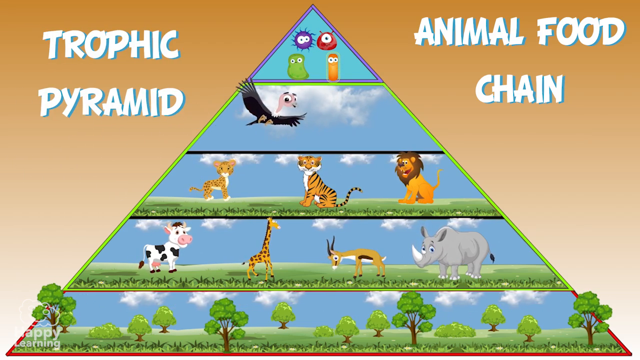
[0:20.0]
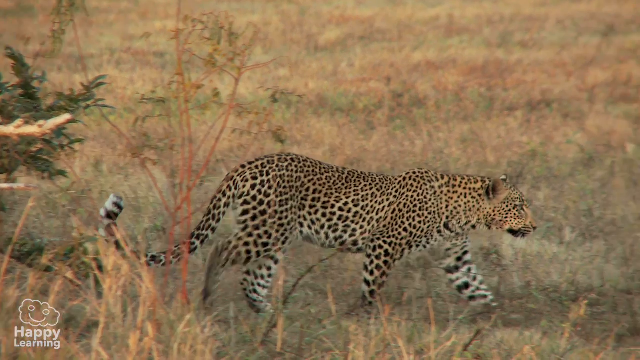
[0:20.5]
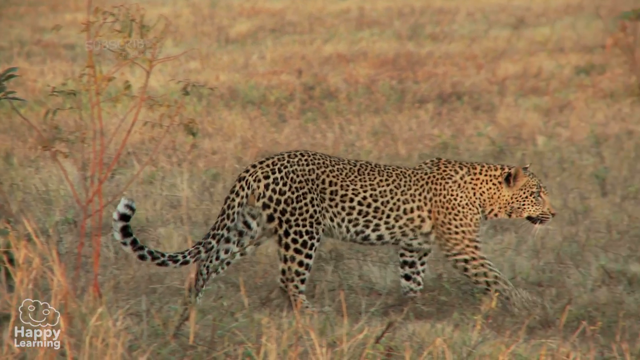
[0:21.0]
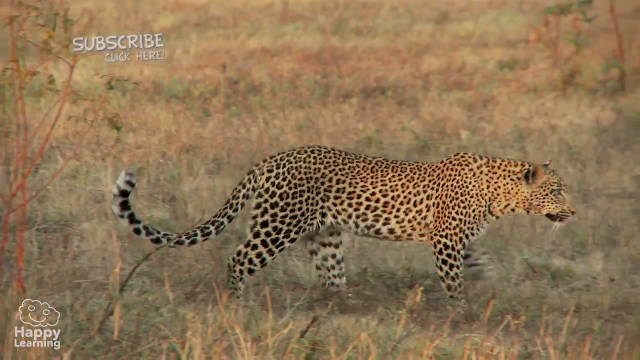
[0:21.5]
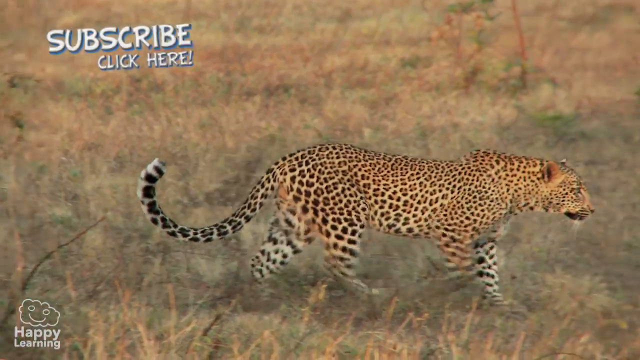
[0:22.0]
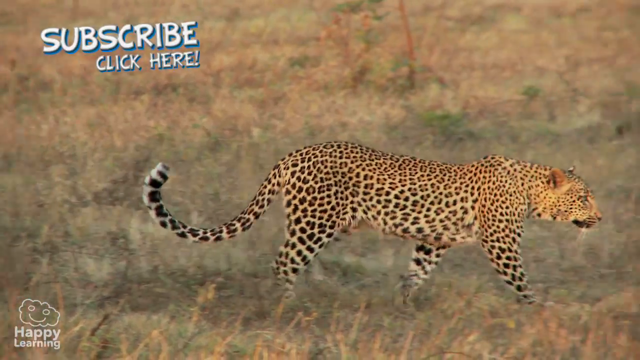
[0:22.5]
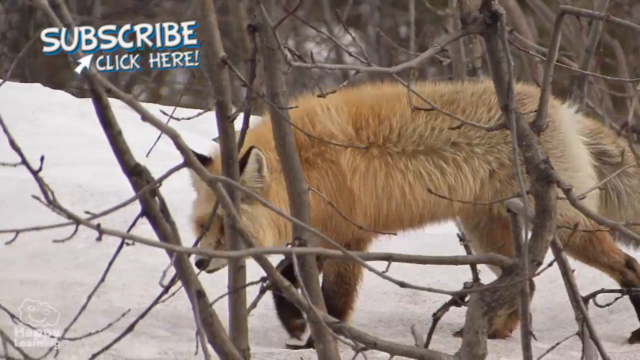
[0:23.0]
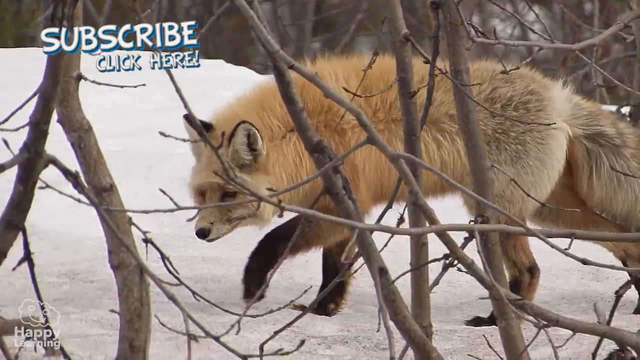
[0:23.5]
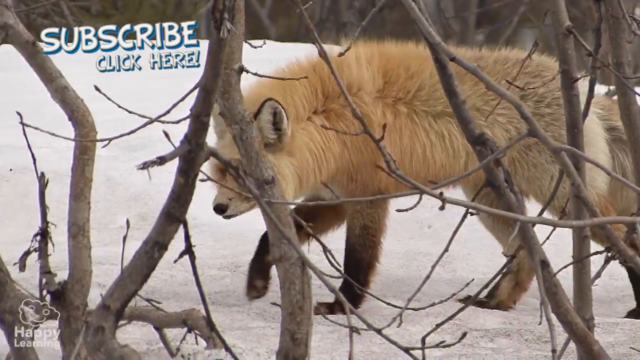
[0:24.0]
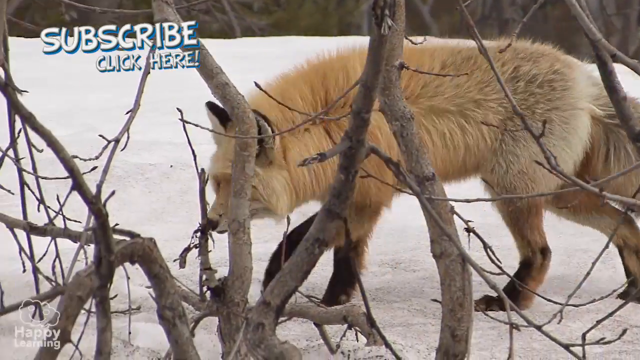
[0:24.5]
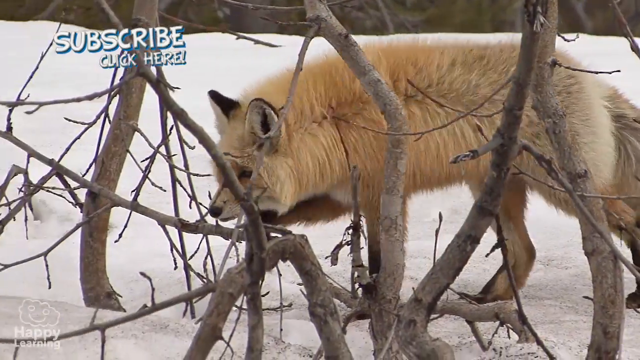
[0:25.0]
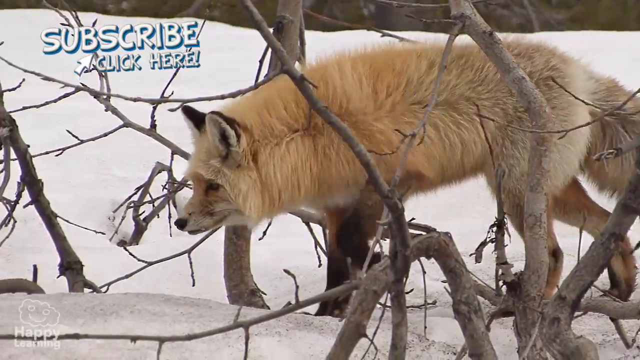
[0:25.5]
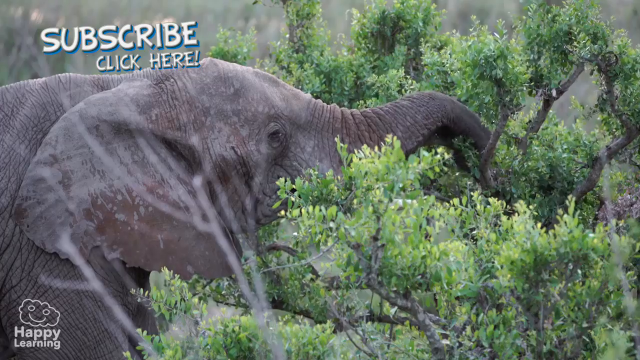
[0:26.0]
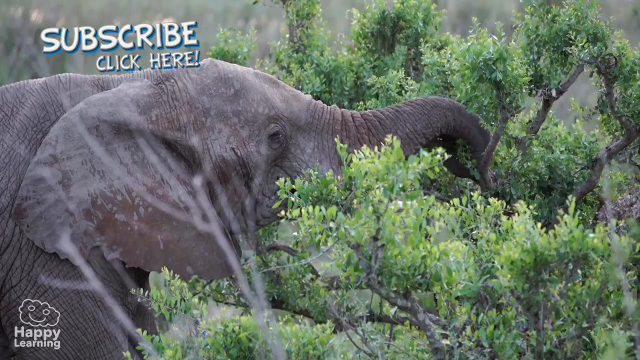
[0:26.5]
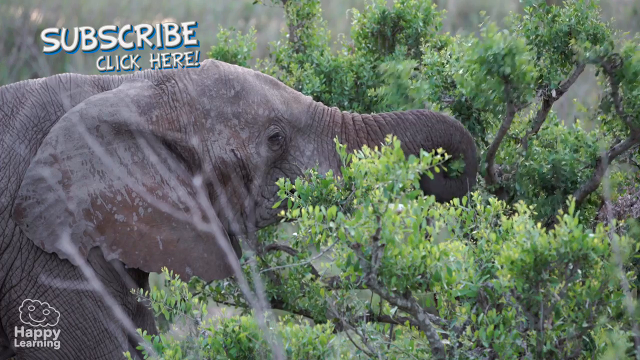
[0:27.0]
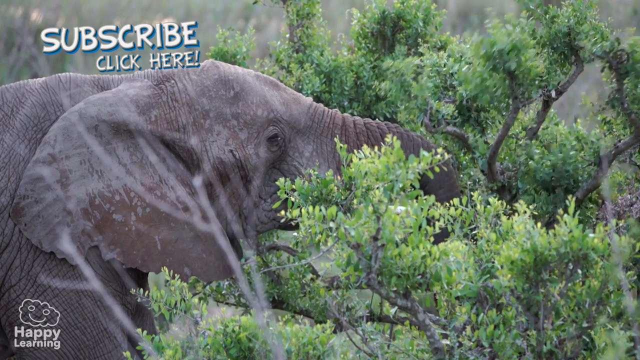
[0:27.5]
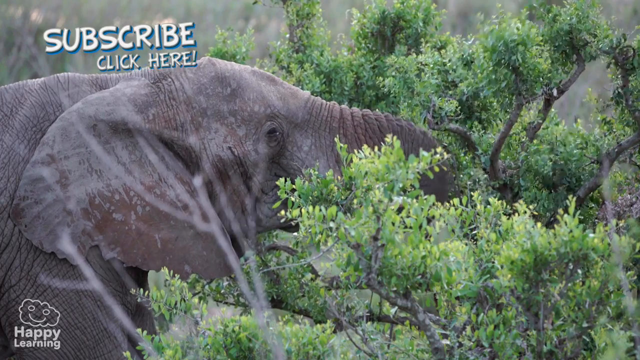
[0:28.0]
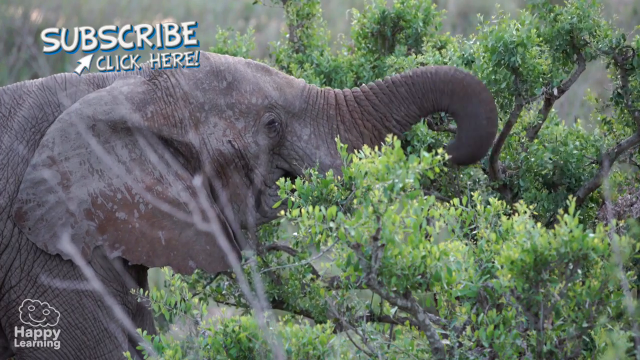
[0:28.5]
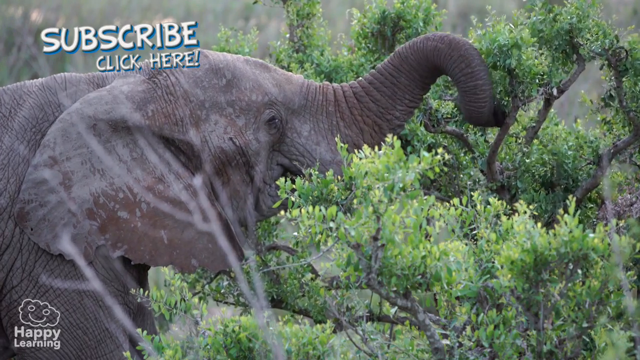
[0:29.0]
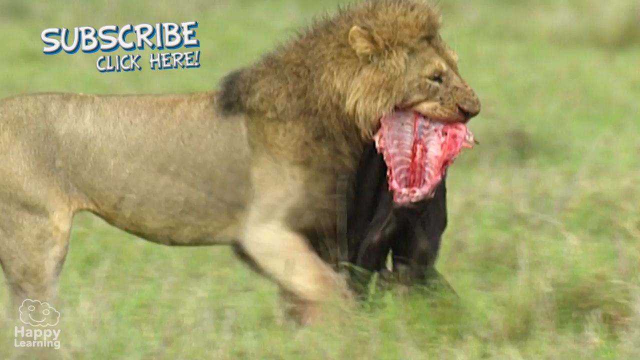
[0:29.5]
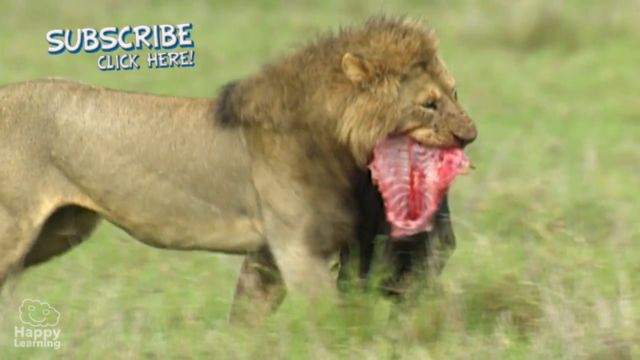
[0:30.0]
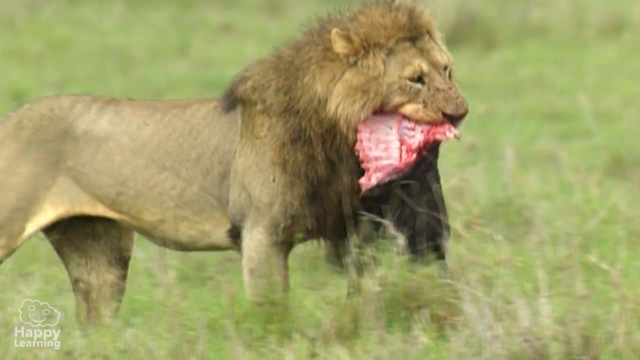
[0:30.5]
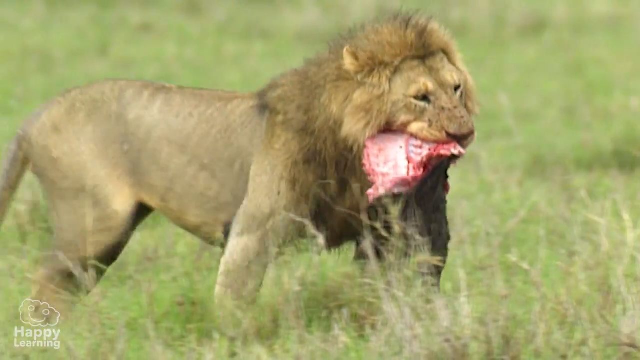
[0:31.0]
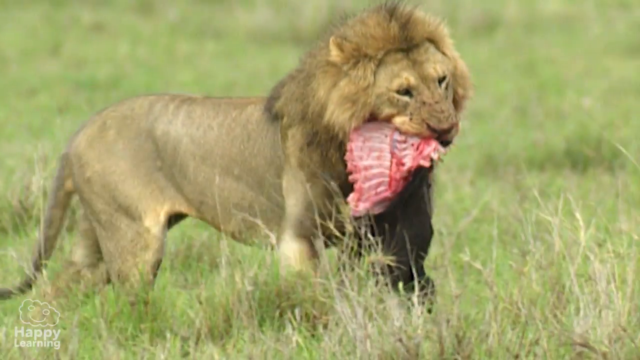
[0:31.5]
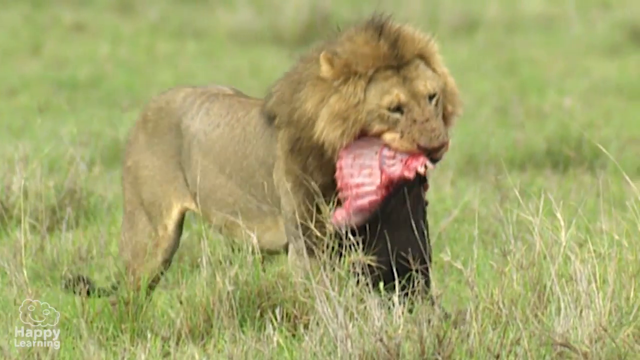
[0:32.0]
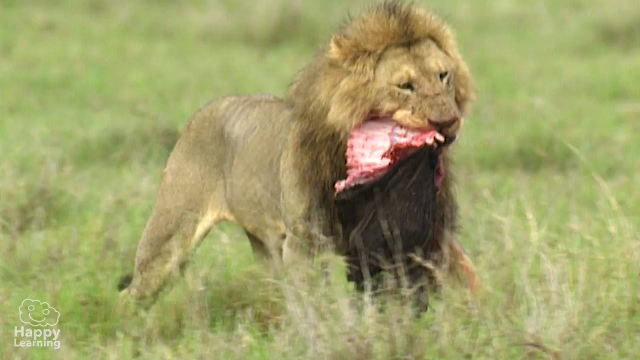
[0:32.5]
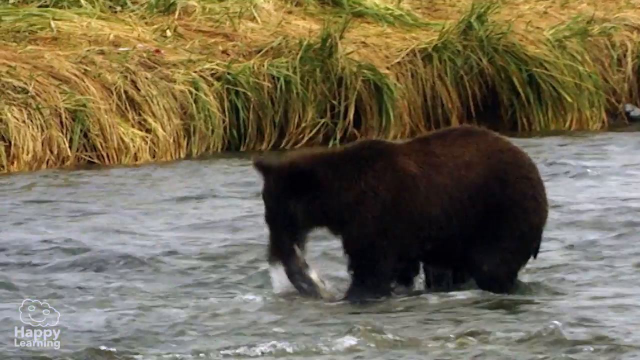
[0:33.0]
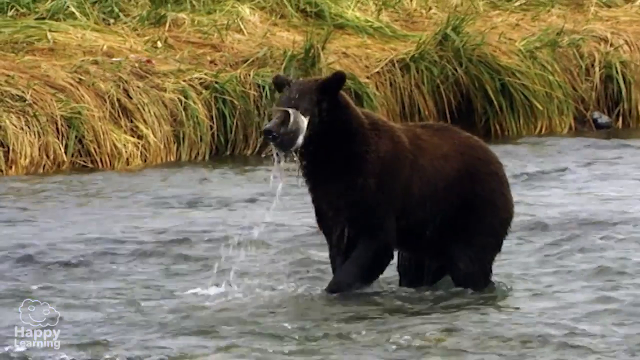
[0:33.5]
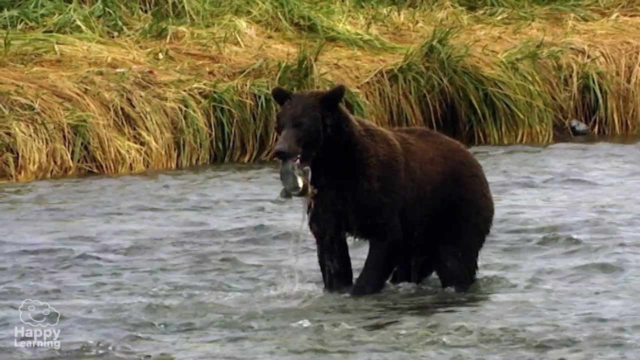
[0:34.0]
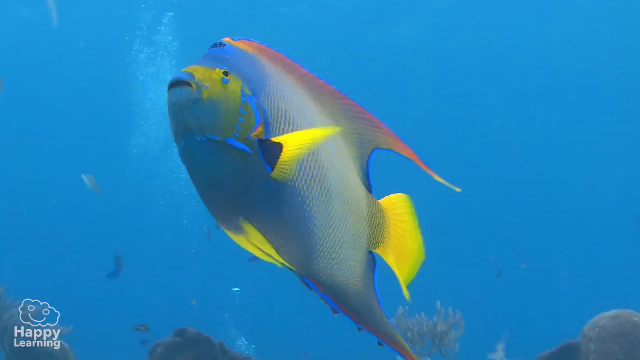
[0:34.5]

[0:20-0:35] A large cat, most likely a leopard, walks in the wild toward the right of the frame for a few seconds. The footage transitions to what looks like a fox of some sort walking in snow with some tree branches in front of it. Next, an elephant uses its trunk to take leaves off a tree to eat. A lion walks in tall grass with raw meat in its teeth. After that, a big brown bear stands in shallow water with a fish in its mouth. Finally, a blue and yellow fish swims underwater.